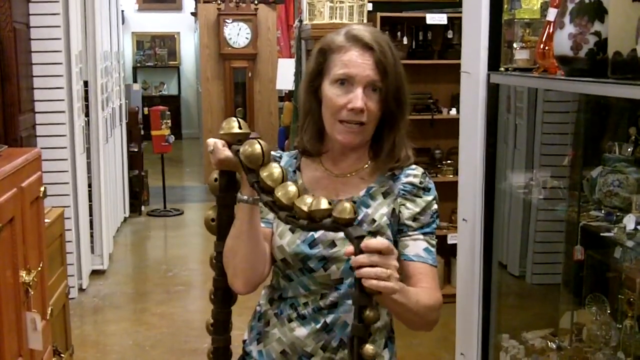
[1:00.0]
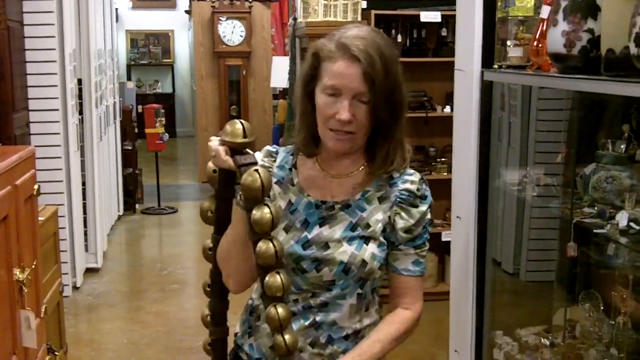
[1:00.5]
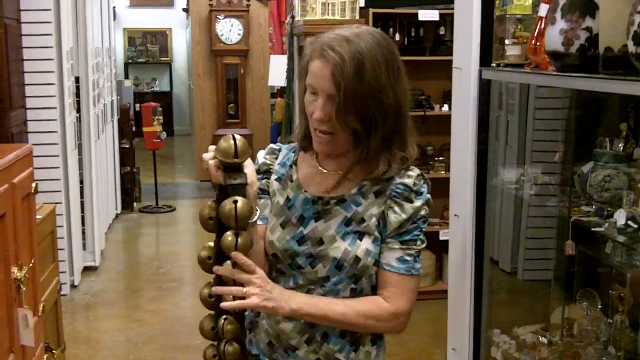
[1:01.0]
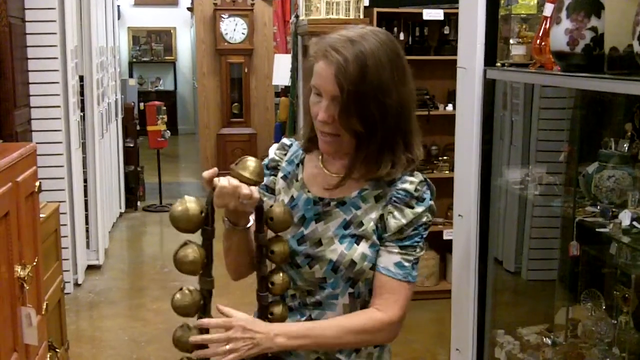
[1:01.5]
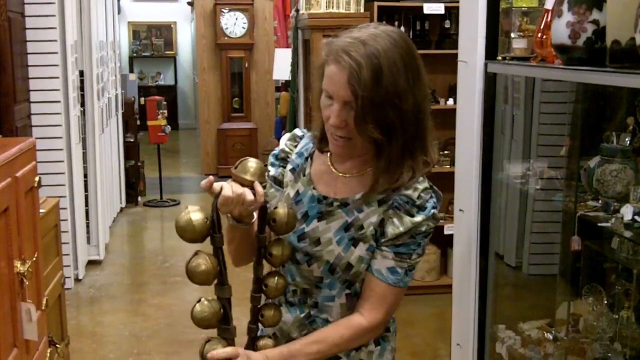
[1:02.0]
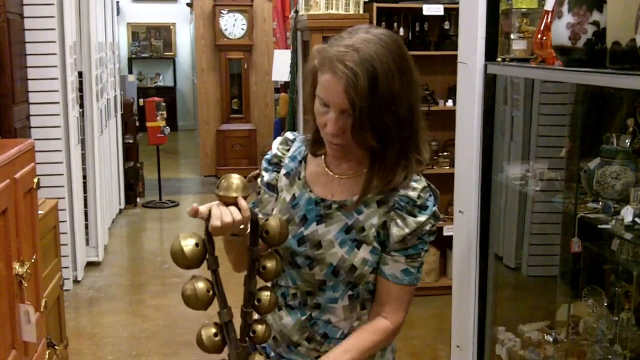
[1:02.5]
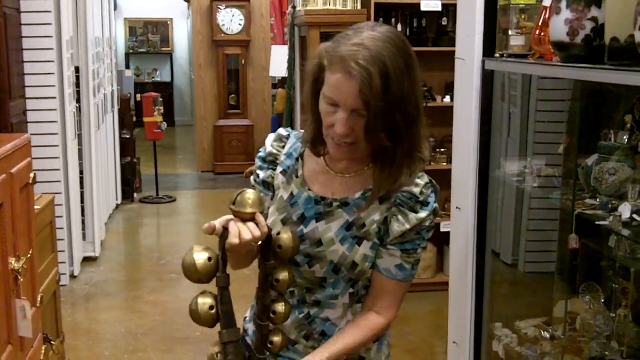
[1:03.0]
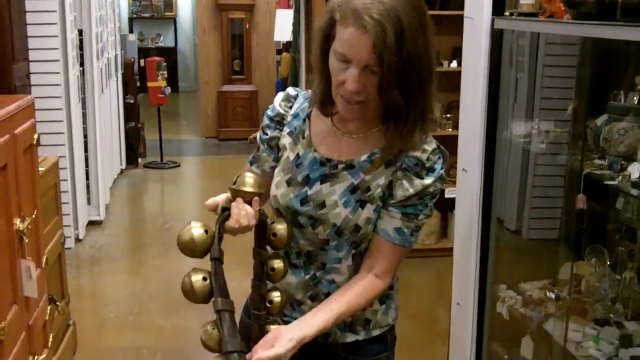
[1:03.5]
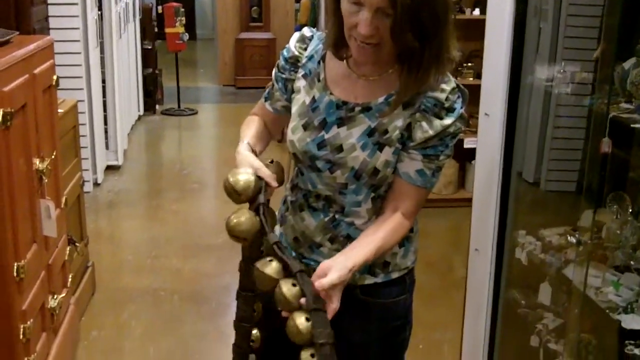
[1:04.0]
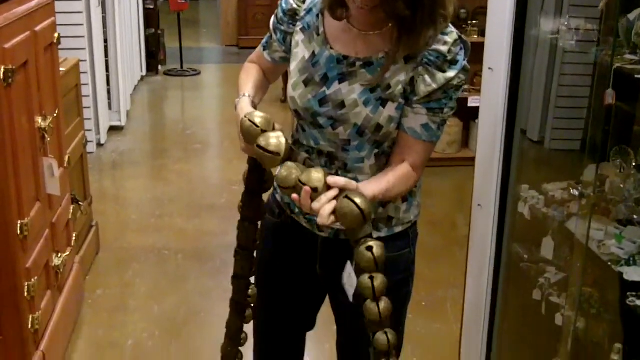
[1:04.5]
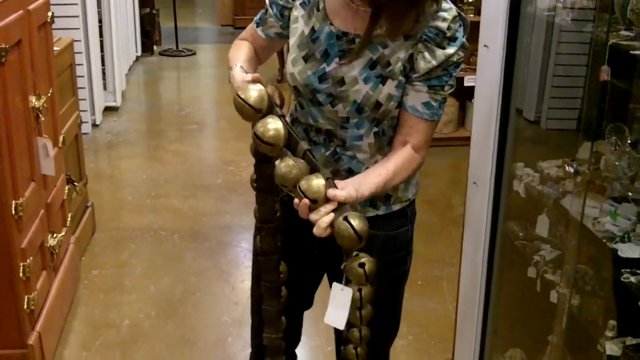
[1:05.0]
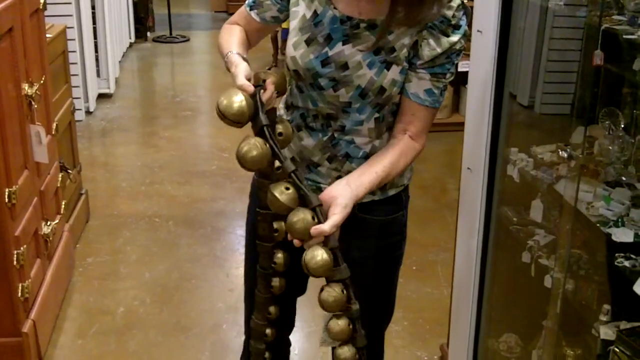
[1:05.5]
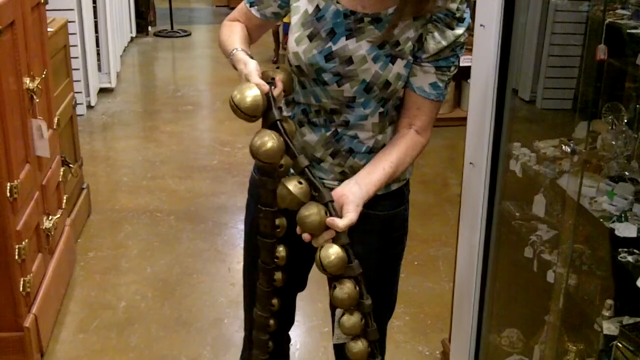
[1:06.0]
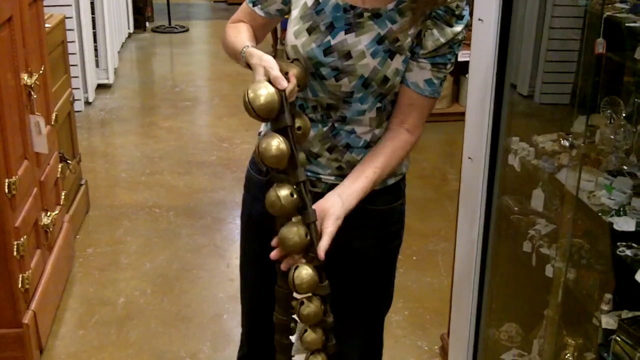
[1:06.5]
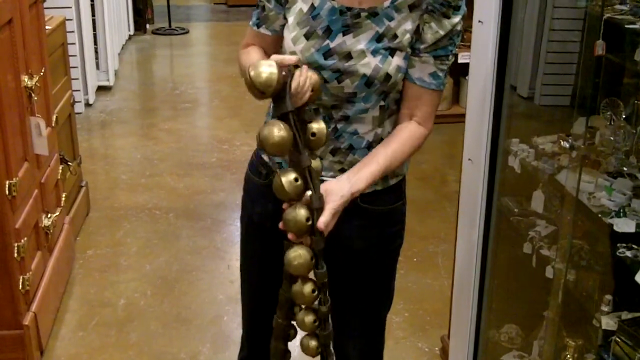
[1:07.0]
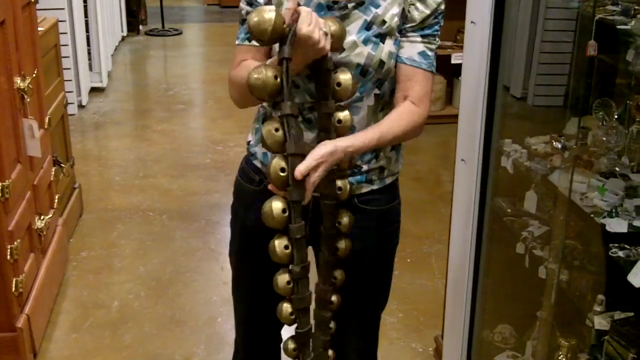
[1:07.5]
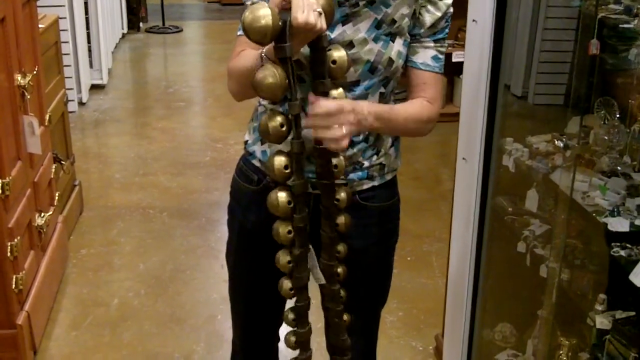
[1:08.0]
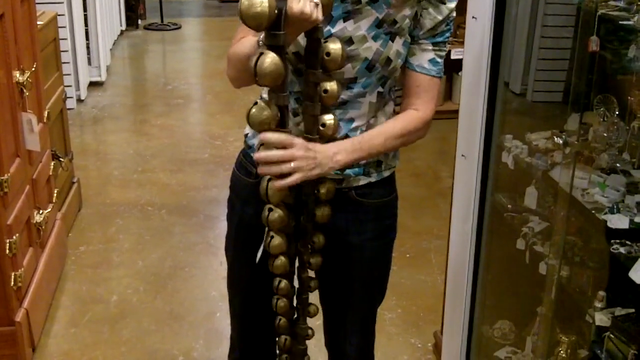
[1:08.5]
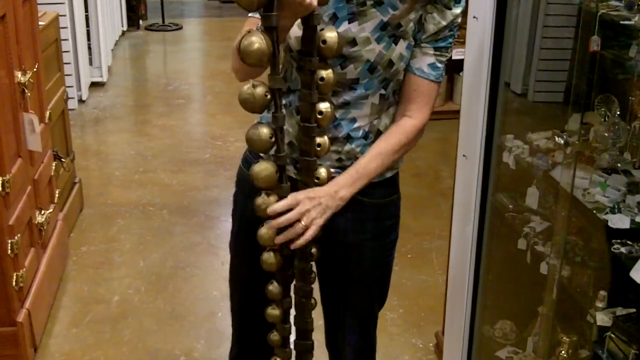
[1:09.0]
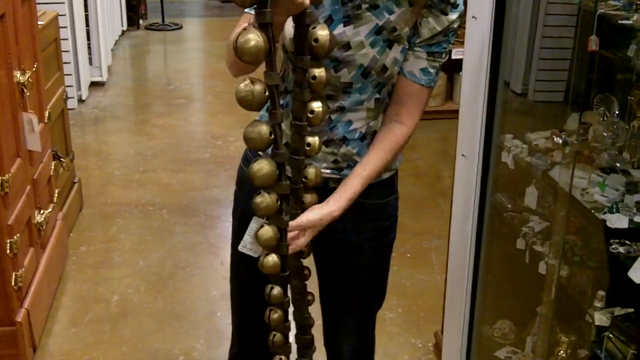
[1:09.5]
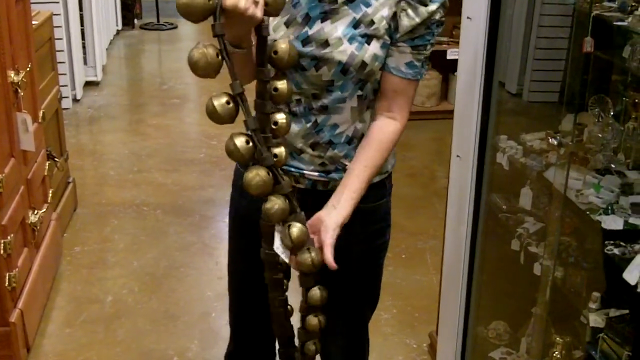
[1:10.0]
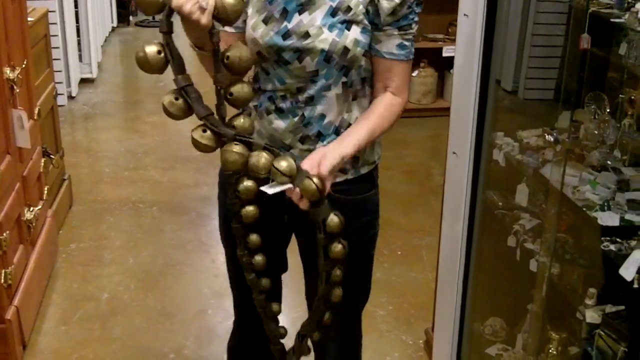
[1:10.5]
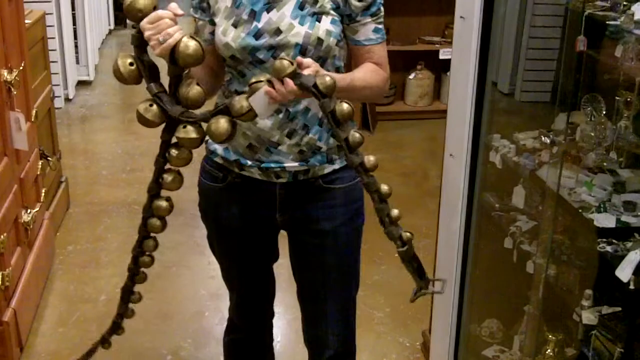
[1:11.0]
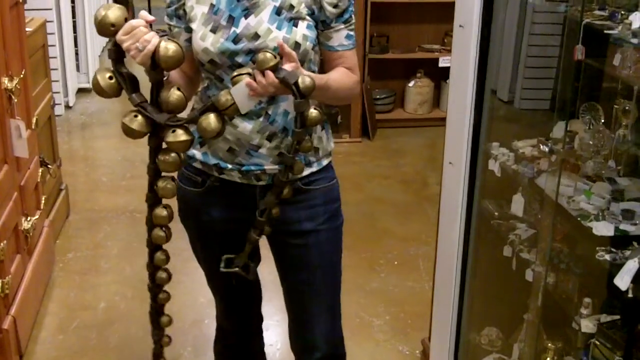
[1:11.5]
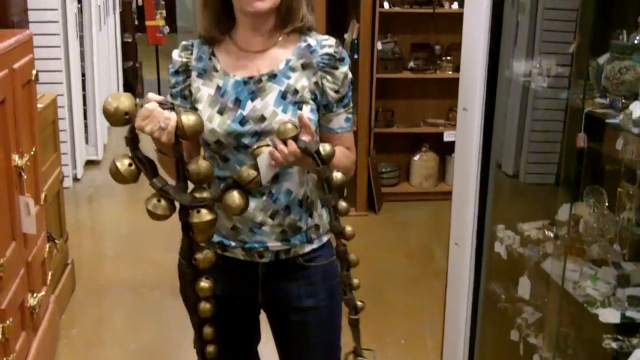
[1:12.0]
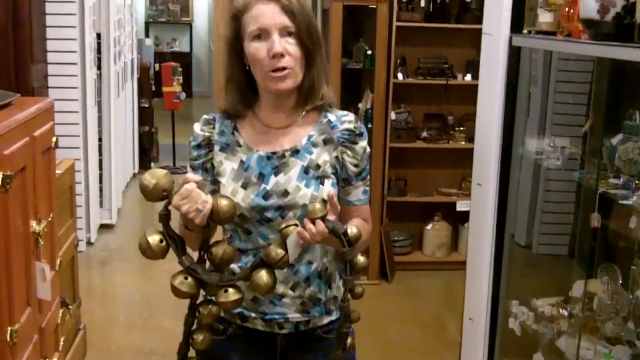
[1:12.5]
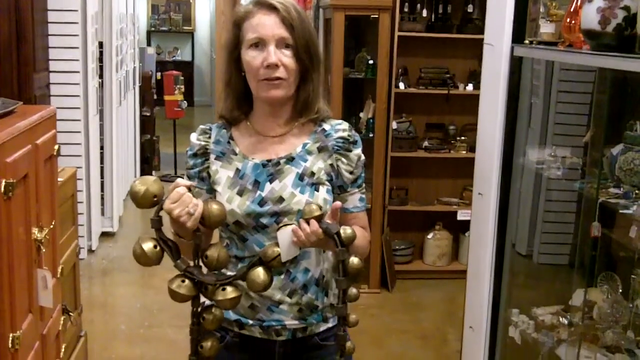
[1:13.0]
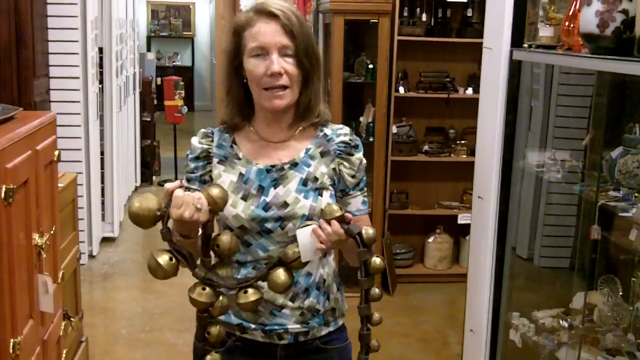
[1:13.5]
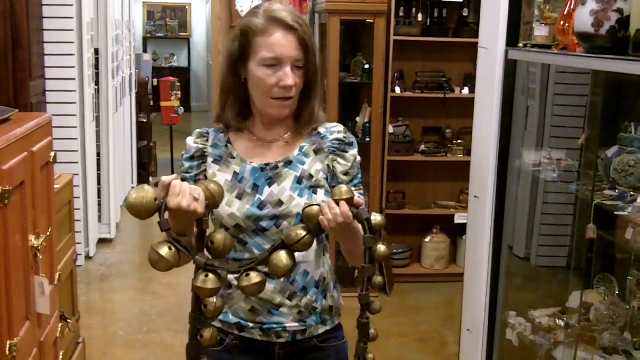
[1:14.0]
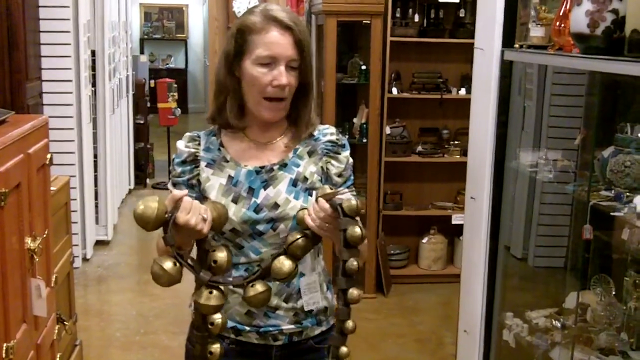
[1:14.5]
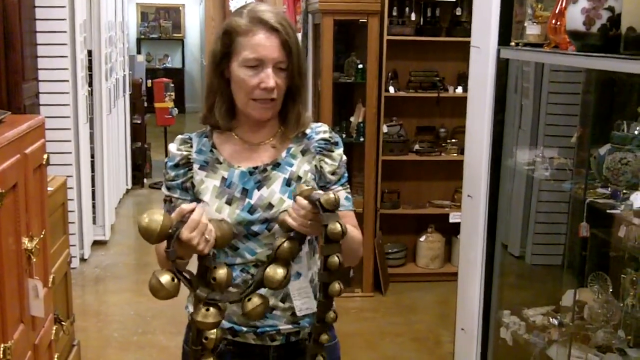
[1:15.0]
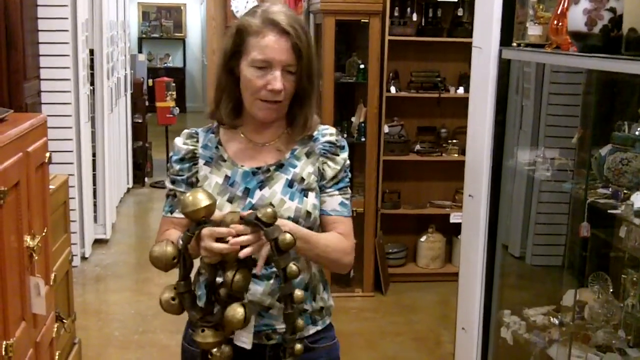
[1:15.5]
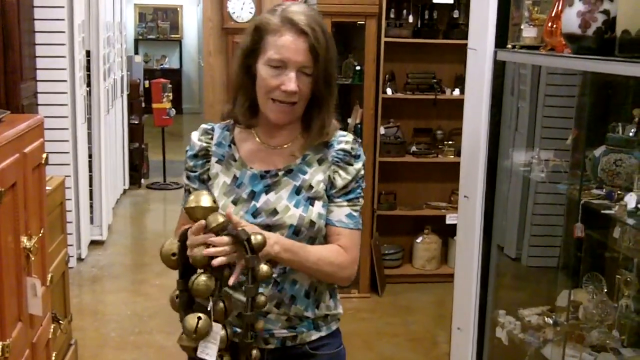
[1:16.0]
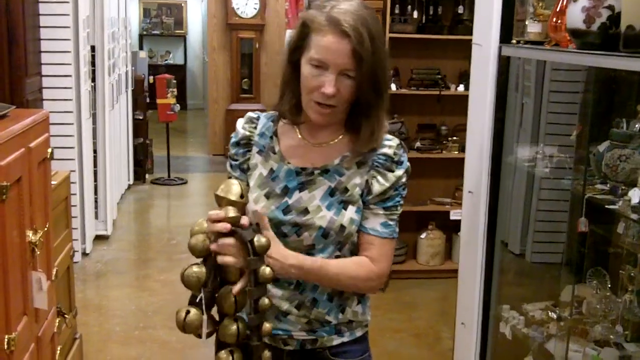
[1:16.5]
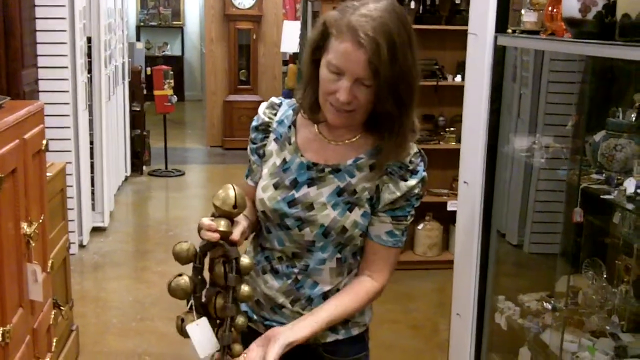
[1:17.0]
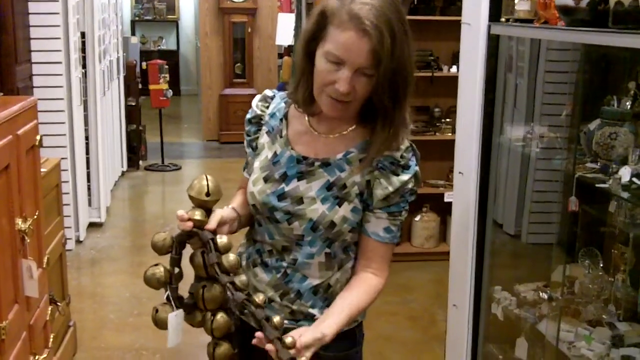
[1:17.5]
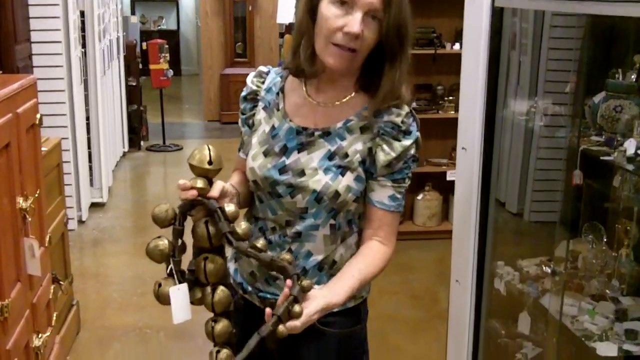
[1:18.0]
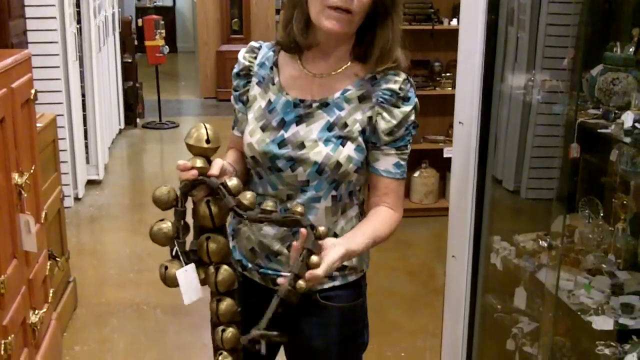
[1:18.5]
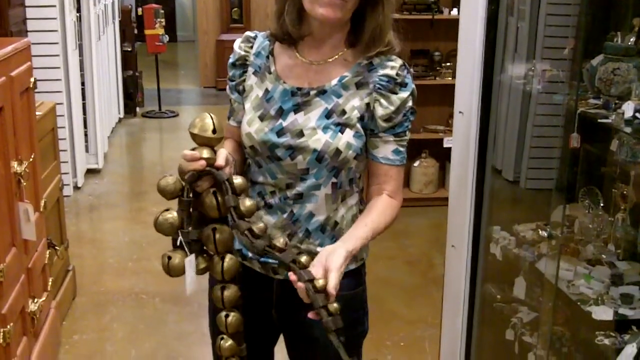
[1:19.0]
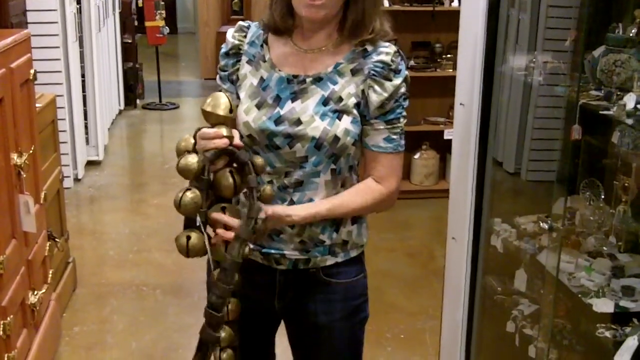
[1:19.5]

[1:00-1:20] A woman holds a brown belt with many gold metal balls and explains the details of the object in her hands in depth. She is in an antique shop, has brown hair, wears a gold chain necklace, and has on a blue and gray floral-patterned top with black buttons. The shop has white walls and doors, and a glass box beside her reflects the doors and herself. There seem to be different objects inside the glass box, and a vase is on top of it. On the other side is a brown cabinet with other brown boxes. Behind her are a long clock, a painting on the wall, and various things, including a shelf holding items, some gold, brown and black in color.